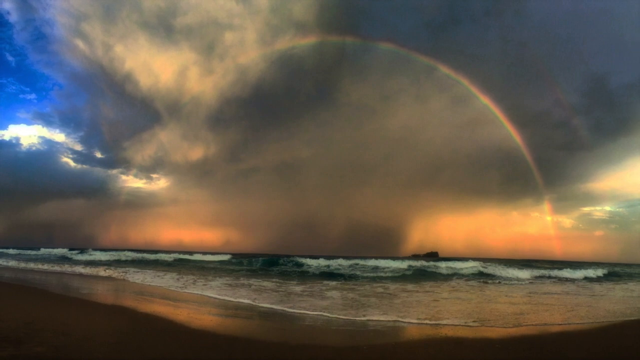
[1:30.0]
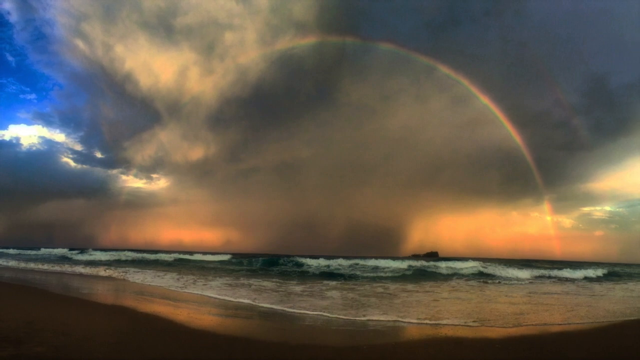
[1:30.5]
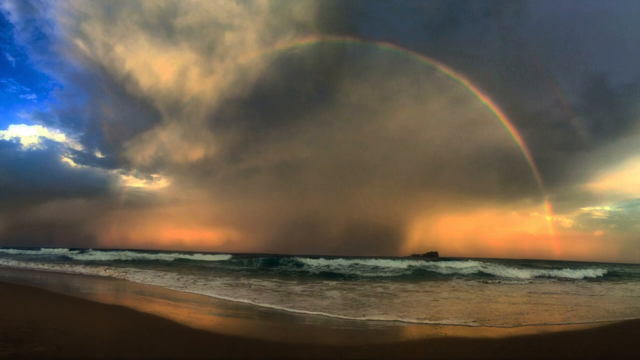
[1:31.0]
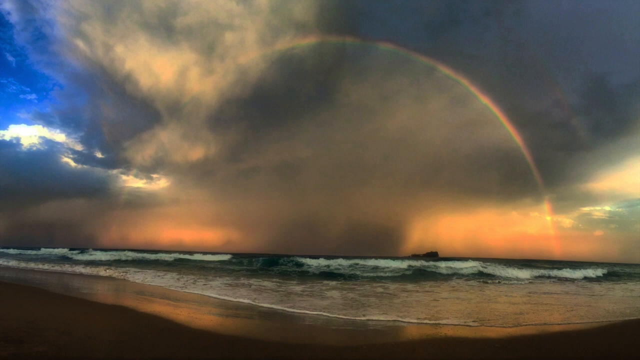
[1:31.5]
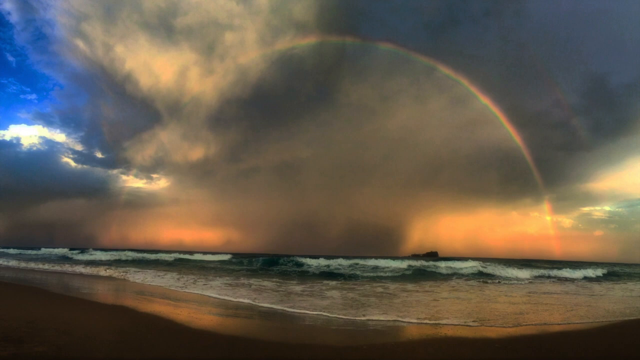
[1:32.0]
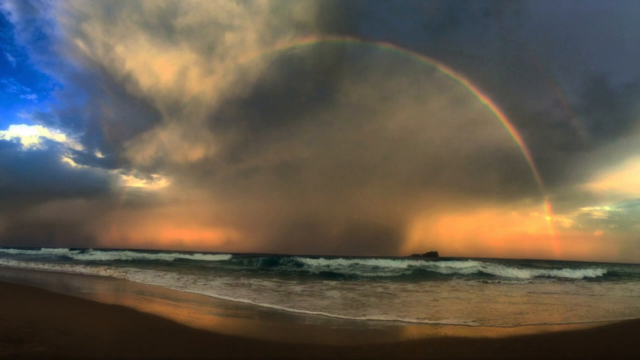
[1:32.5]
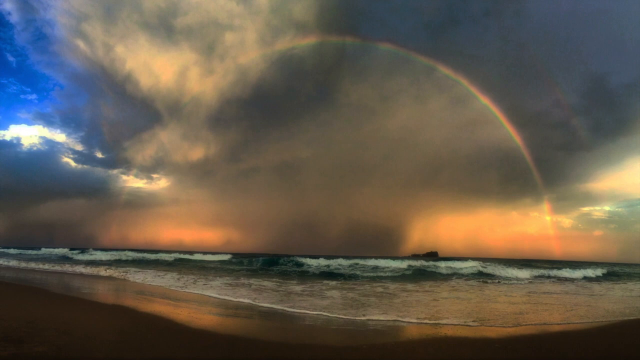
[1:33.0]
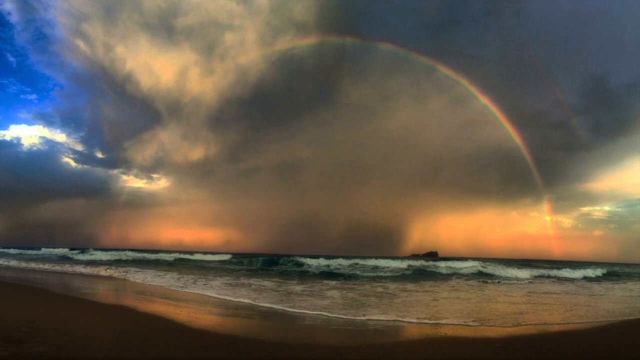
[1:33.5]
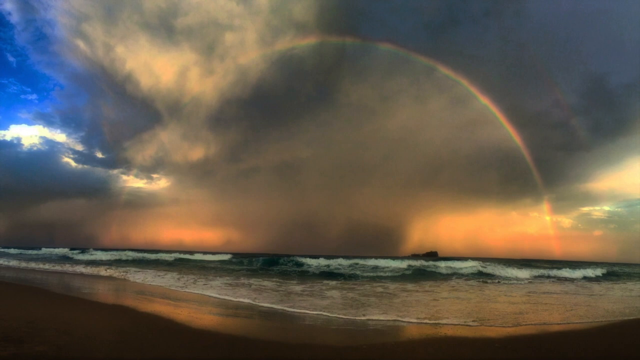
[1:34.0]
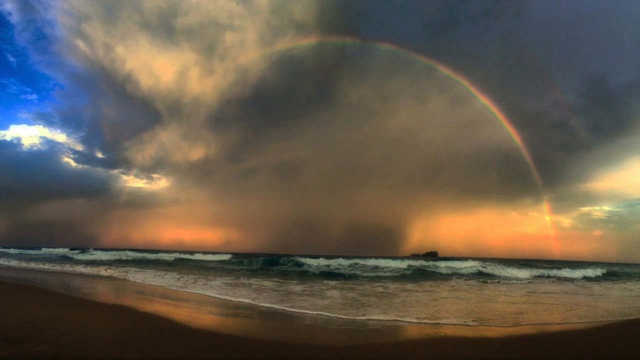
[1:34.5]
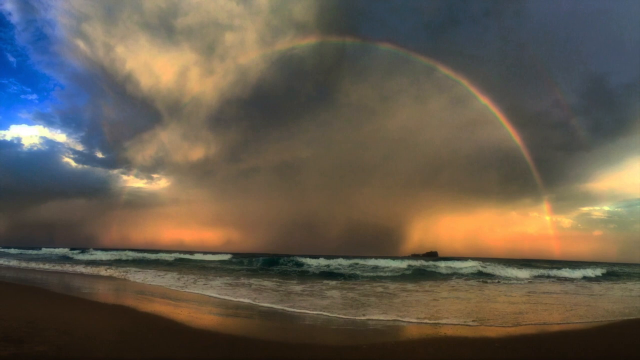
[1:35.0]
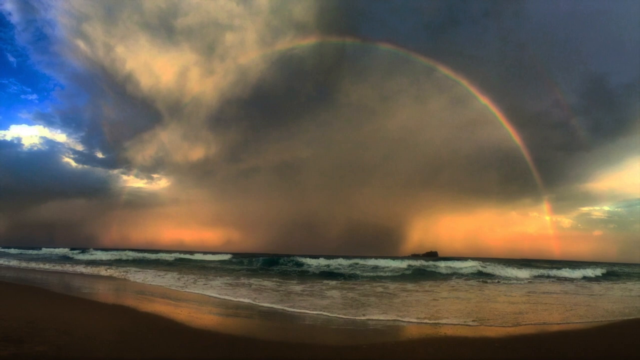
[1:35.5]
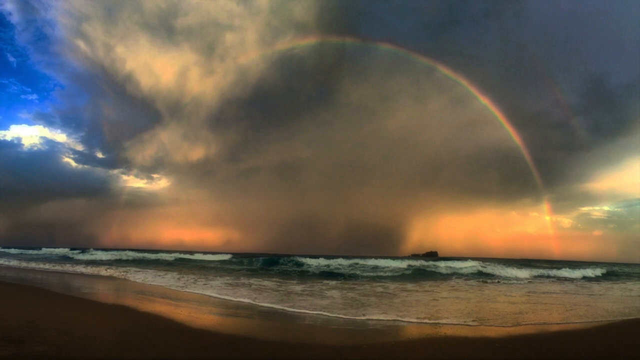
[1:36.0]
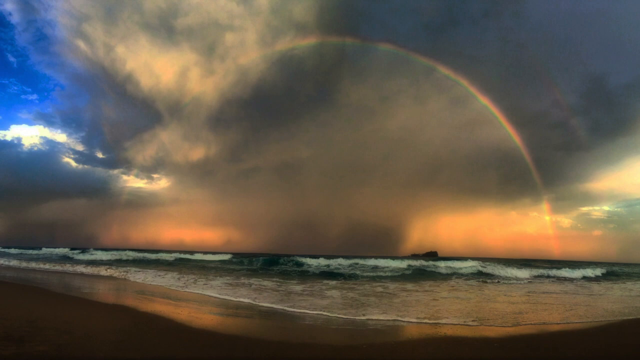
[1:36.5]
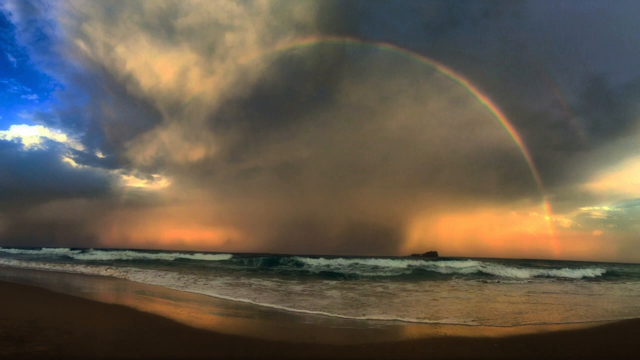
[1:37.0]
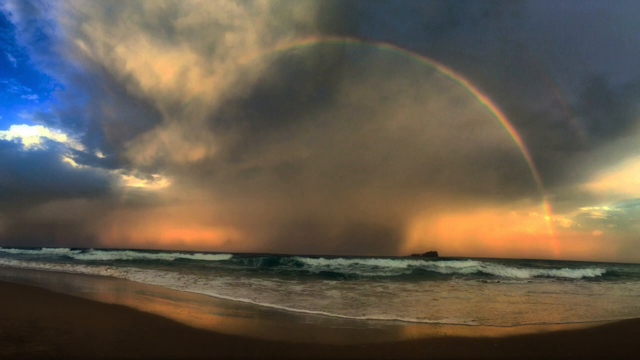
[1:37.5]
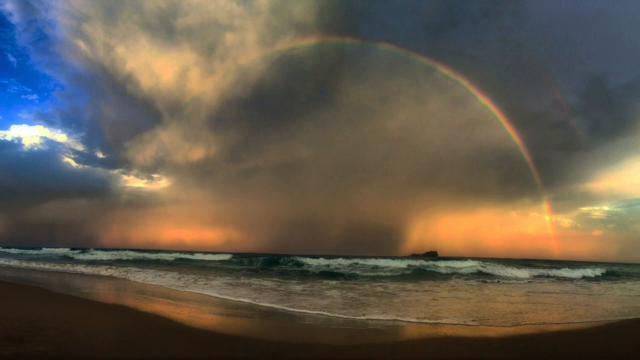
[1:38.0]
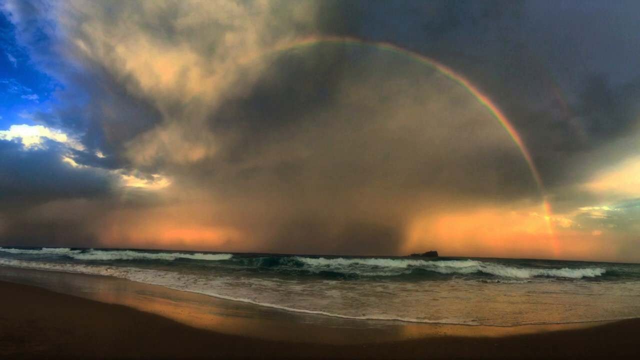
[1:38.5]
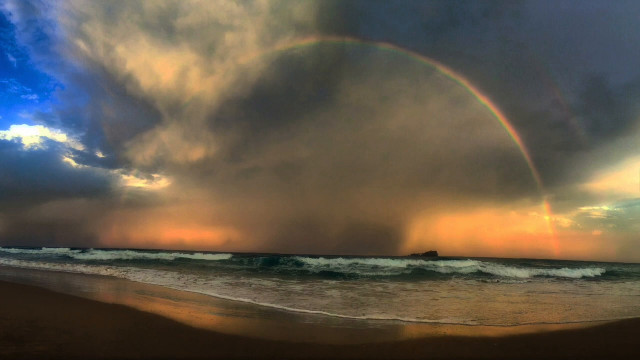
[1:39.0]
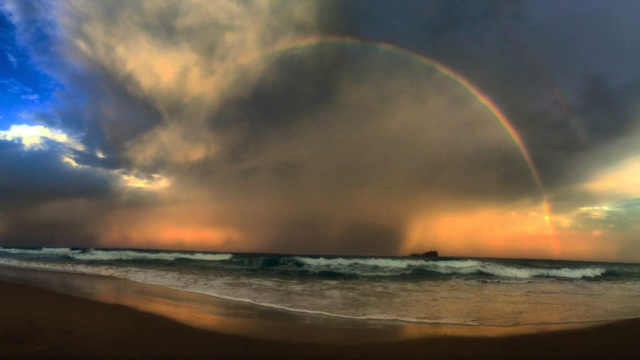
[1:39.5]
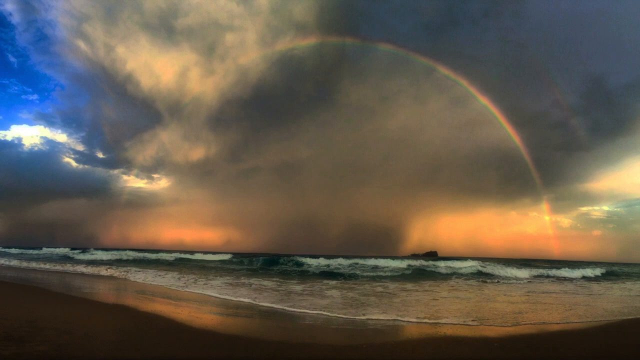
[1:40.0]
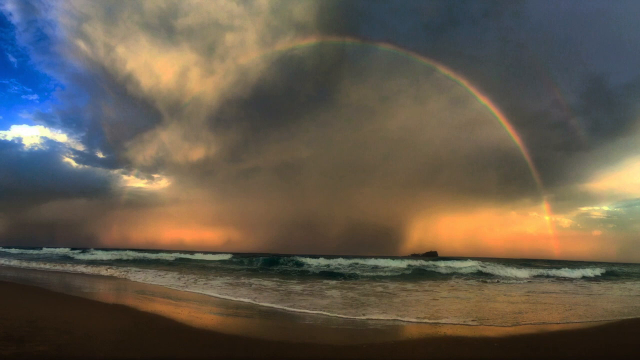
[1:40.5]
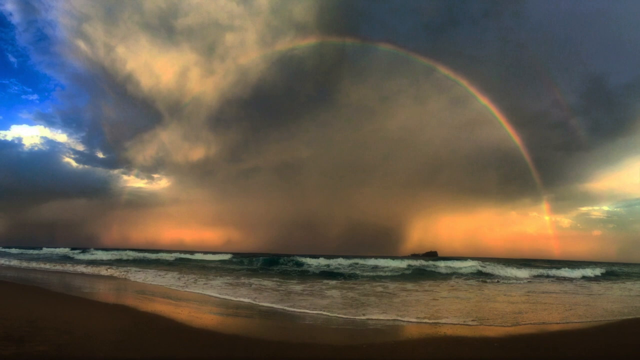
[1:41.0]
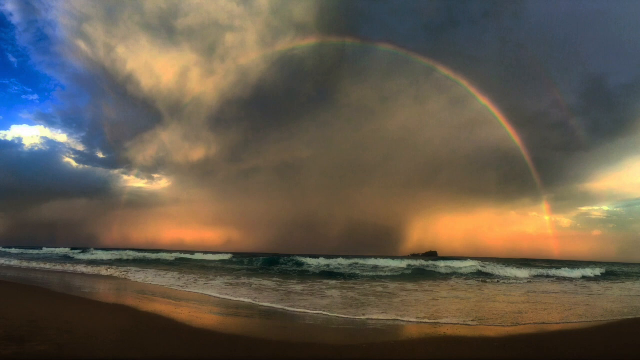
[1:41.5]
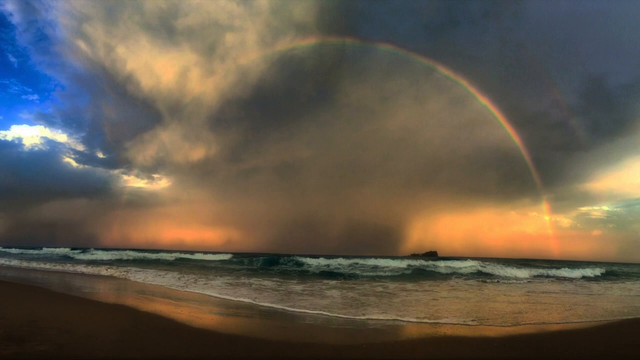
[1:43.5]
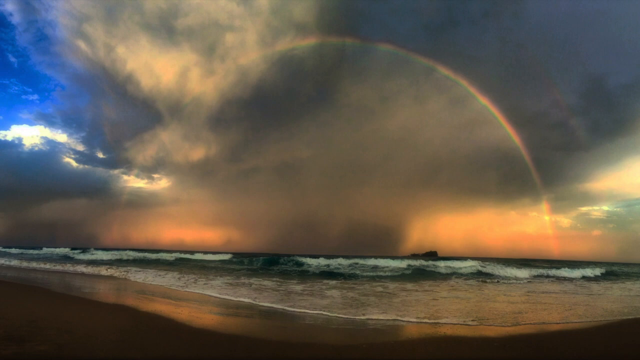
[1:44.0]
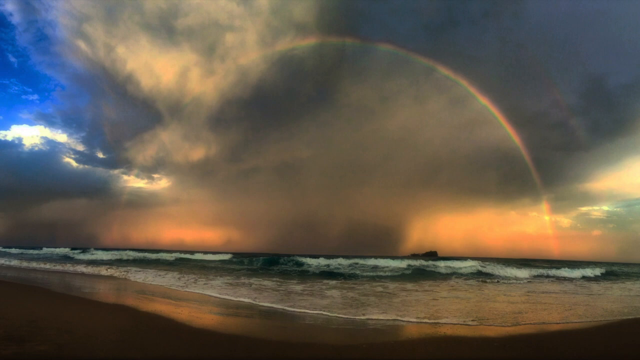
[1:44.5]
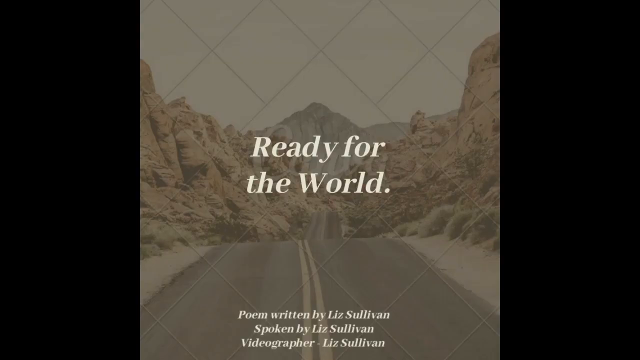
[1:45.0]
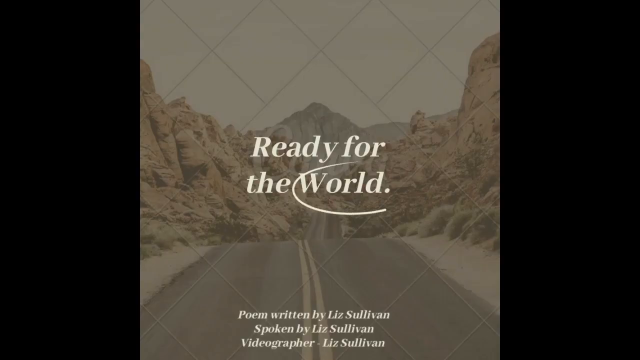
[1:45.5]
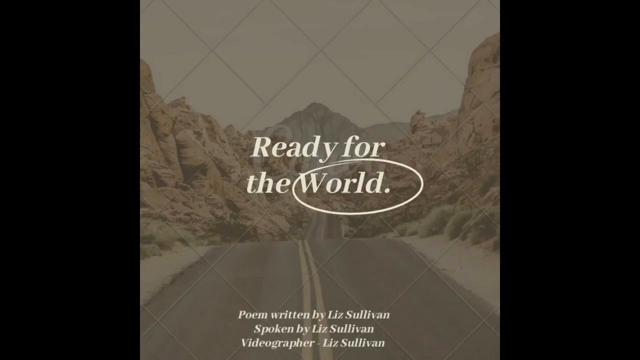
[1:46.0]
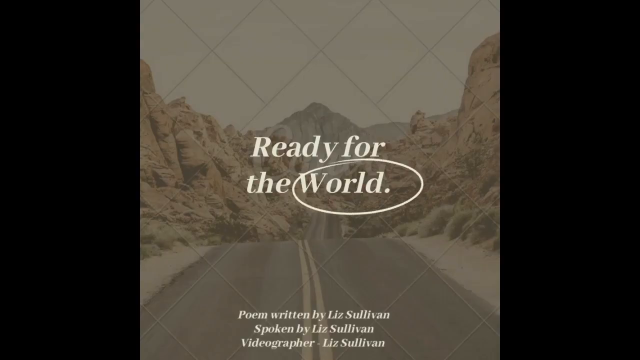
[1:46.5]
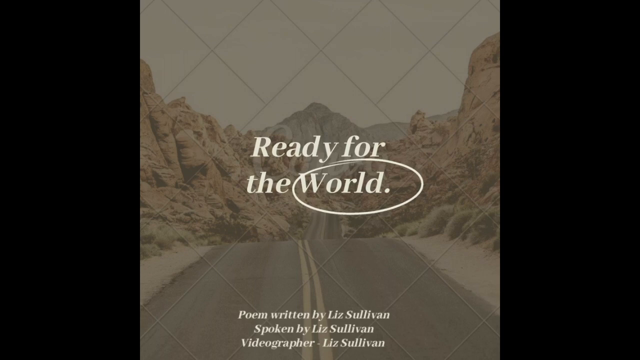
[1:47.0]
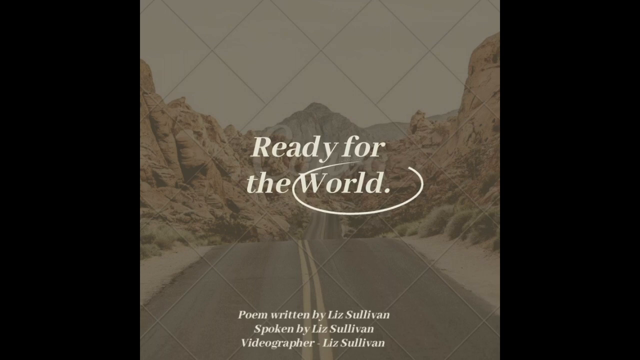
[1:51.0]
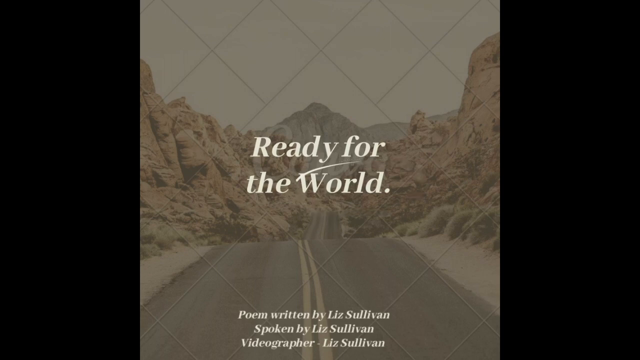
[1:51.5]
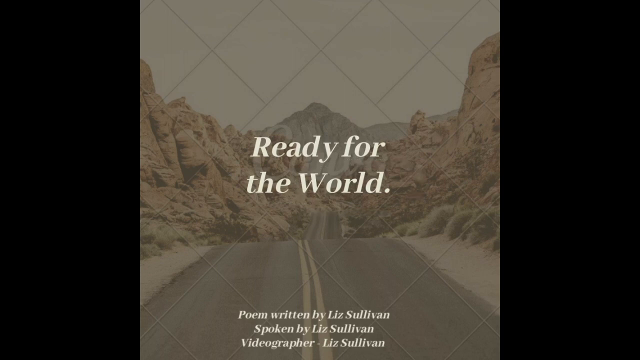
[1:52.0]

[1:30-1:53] The beach is in the foreground beside the ocean, dark but with red highlights where the setting sun hits it. The incoming water is shallow at the front, and beyond it a low wave is starting to break as it approaches the shore. Further out the ocean is dark blue. In the center of the sky is a large water spout that looks like a tornado. On the horizon on either side of it, the light is red and orange from the setting sun. Gray and white clouds are above the water spout, a perfect rainbow arc is against it, and a patch of blue sky is visible in the upper left-hand corner. Then the scene changes to a two-lane highway with a double yellow center stripe running through some mountains. Across it, white text reads "Ready for the World," with the word "world" circled. Below that, text says "poem written by Liz Sullivan, spoken by Liz Sullivan, videographer Liz Sullivan."